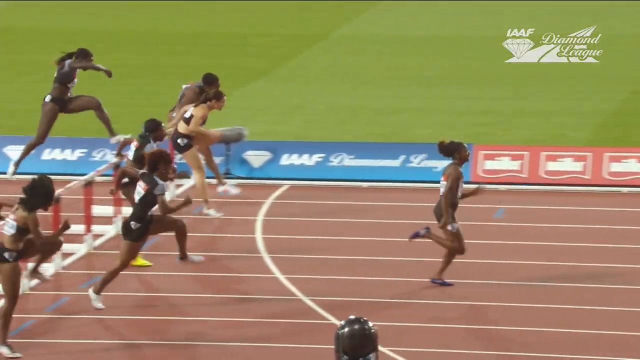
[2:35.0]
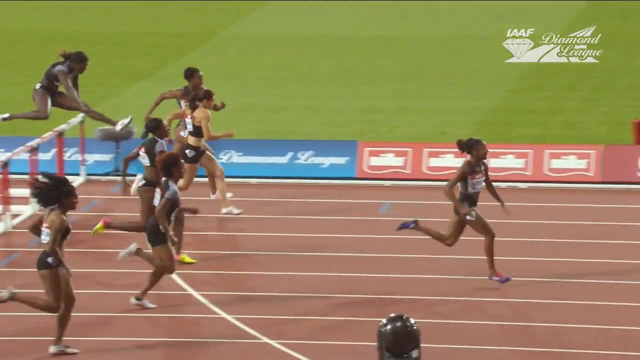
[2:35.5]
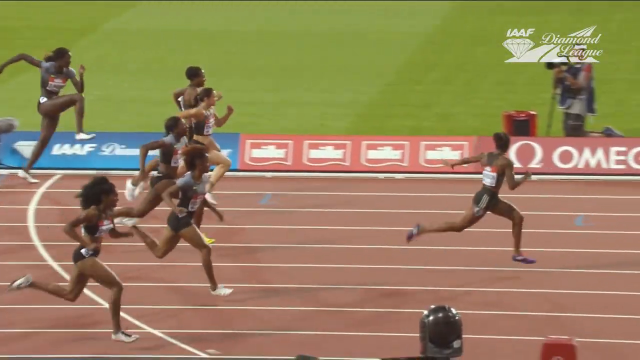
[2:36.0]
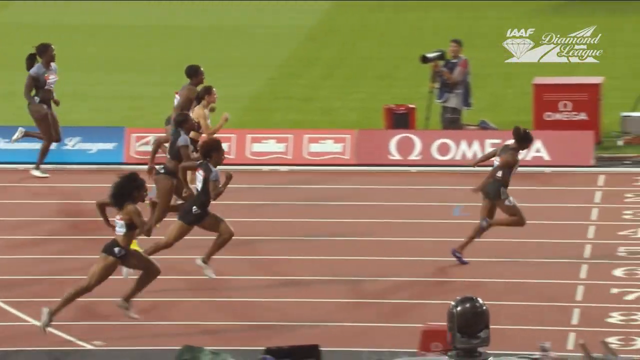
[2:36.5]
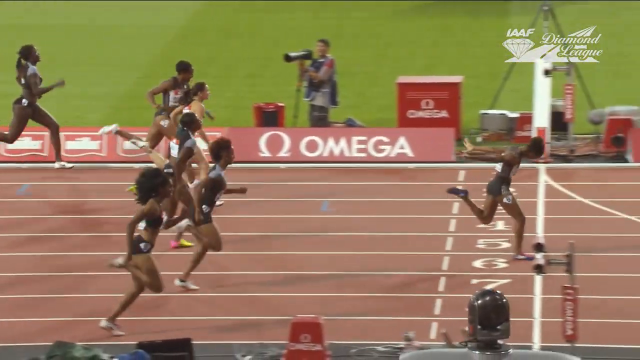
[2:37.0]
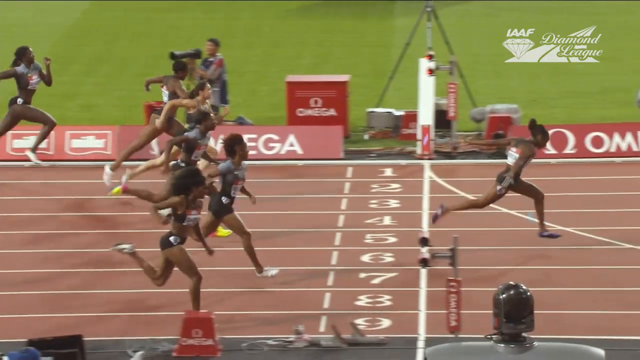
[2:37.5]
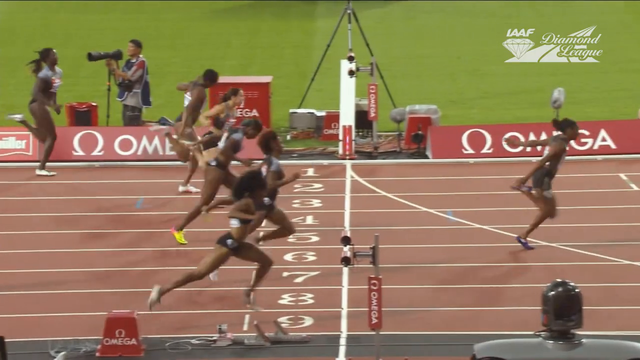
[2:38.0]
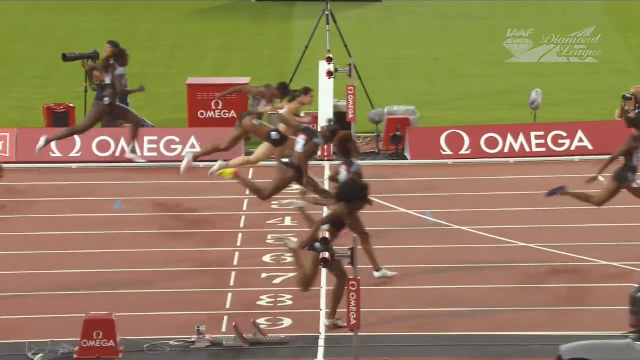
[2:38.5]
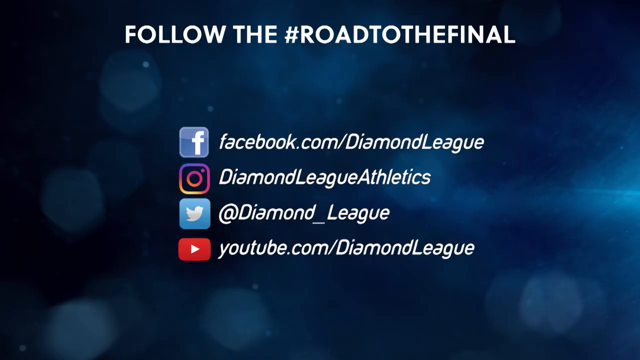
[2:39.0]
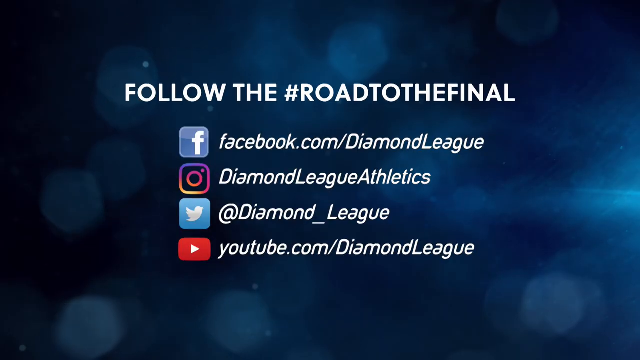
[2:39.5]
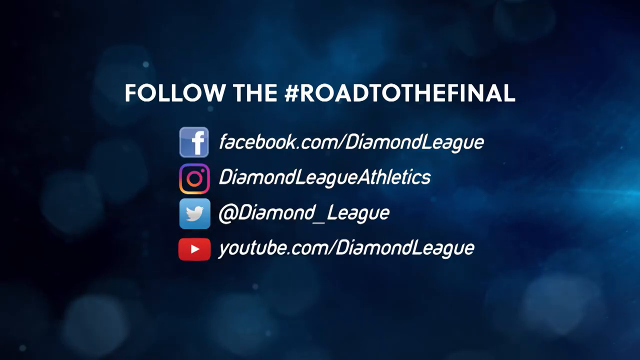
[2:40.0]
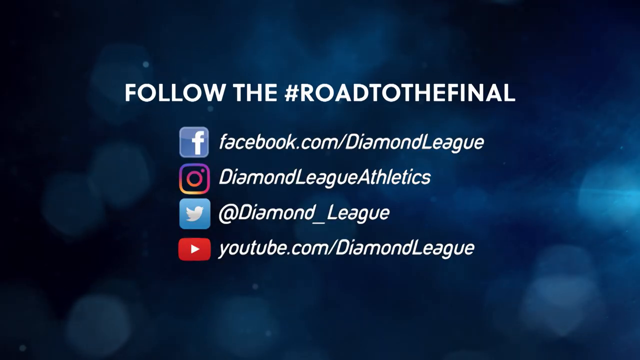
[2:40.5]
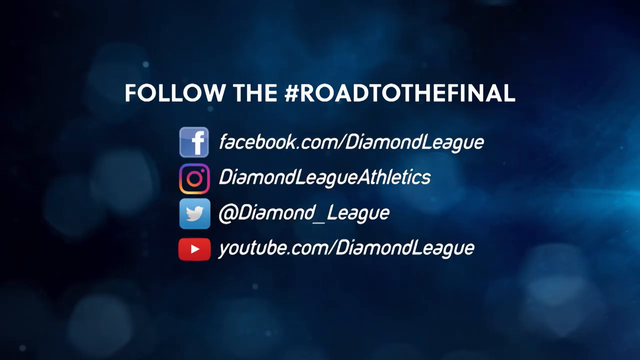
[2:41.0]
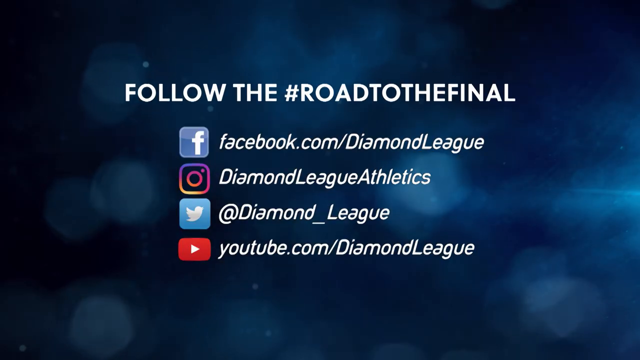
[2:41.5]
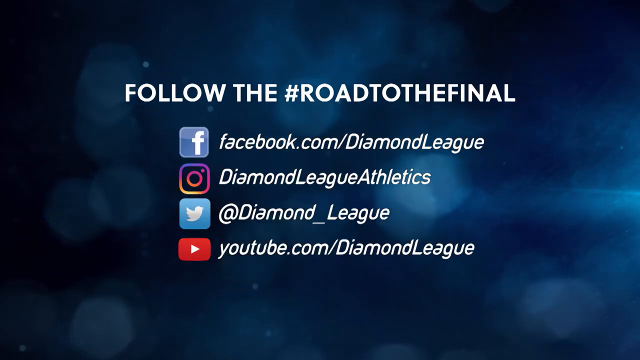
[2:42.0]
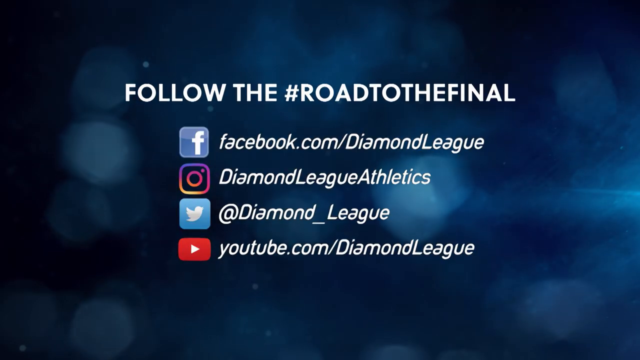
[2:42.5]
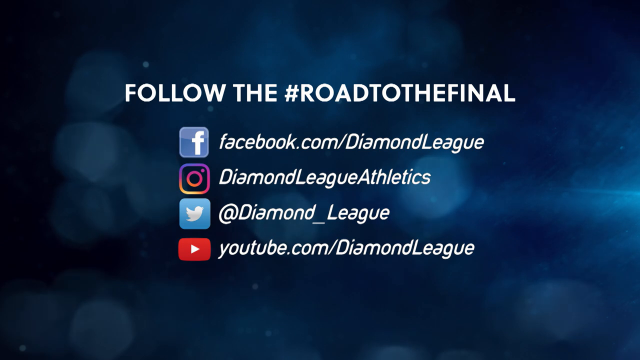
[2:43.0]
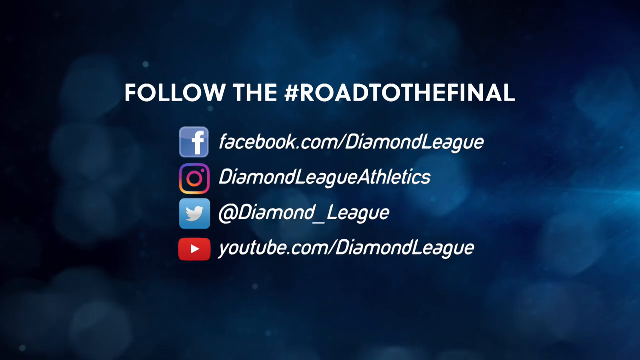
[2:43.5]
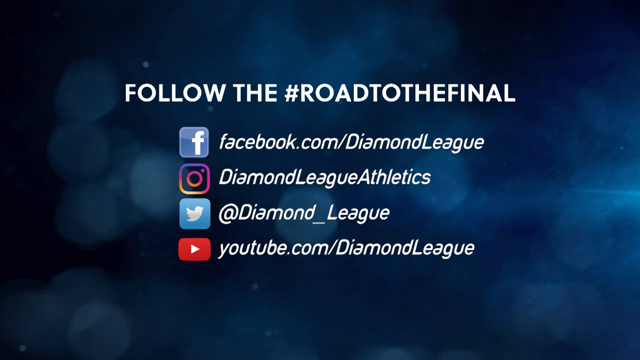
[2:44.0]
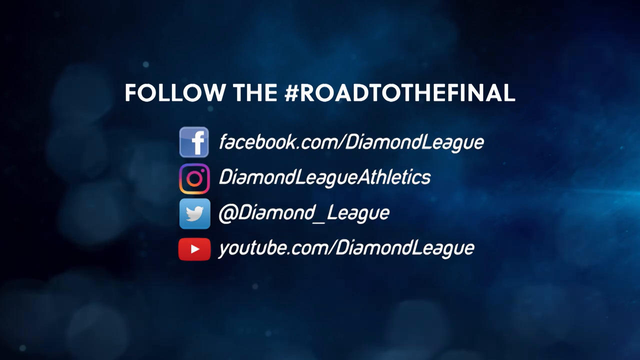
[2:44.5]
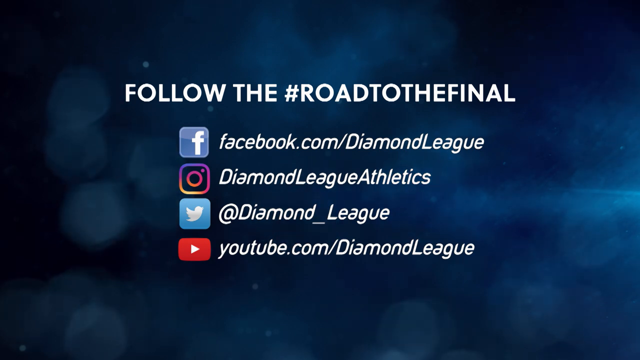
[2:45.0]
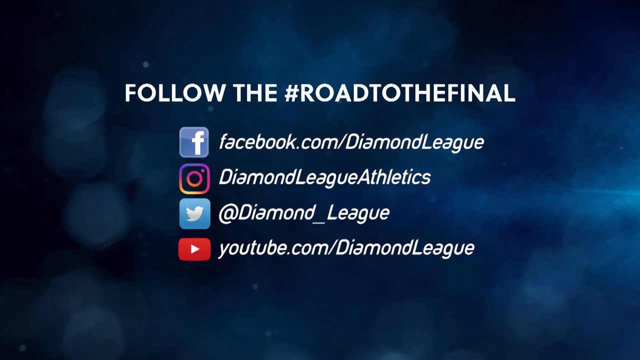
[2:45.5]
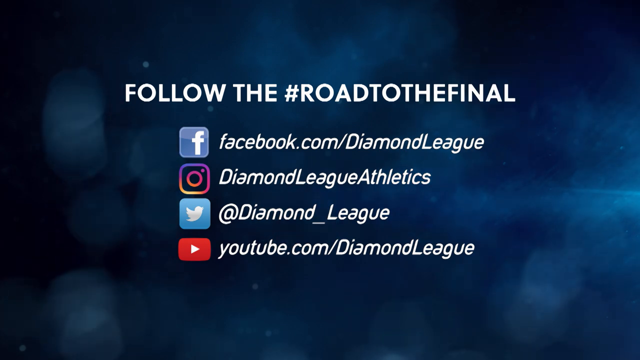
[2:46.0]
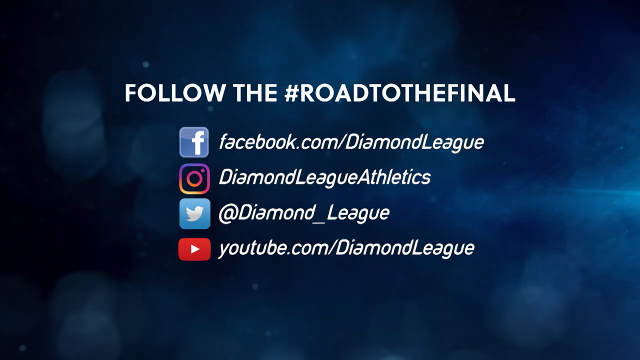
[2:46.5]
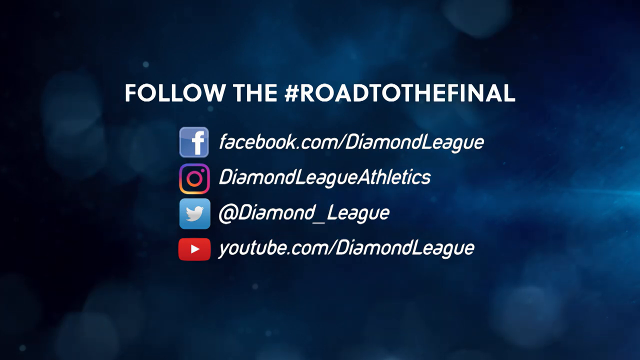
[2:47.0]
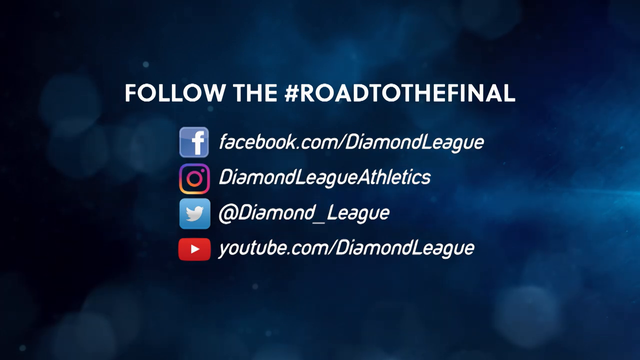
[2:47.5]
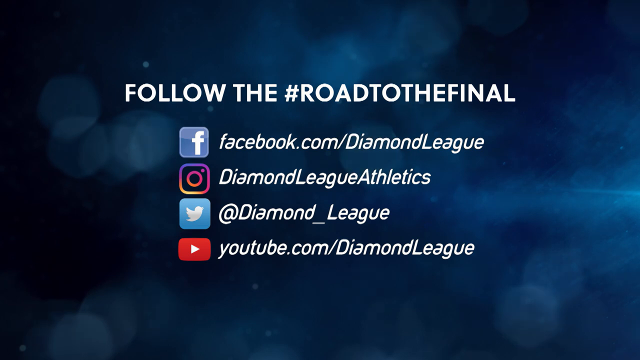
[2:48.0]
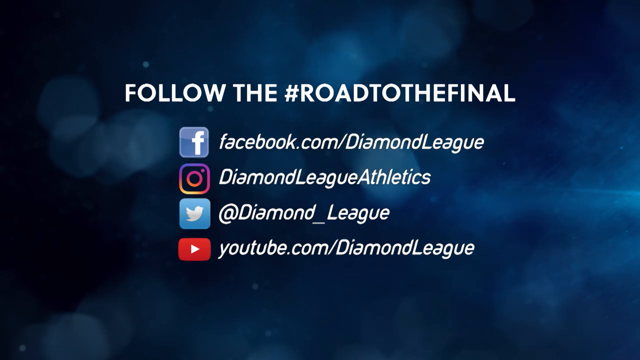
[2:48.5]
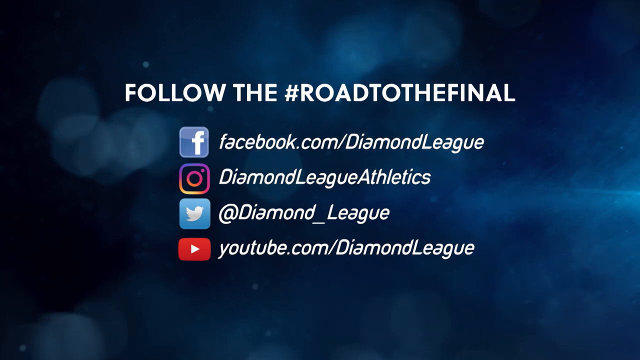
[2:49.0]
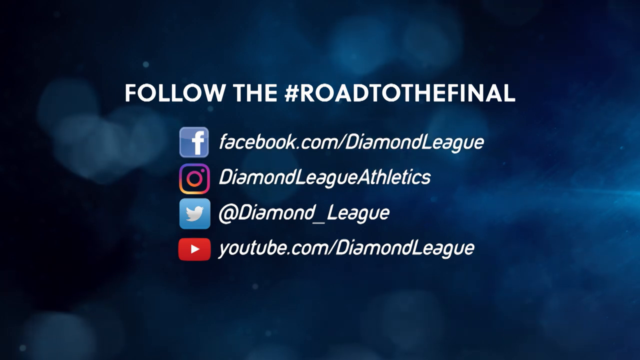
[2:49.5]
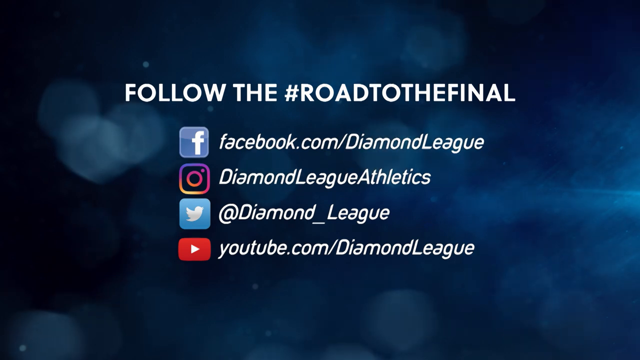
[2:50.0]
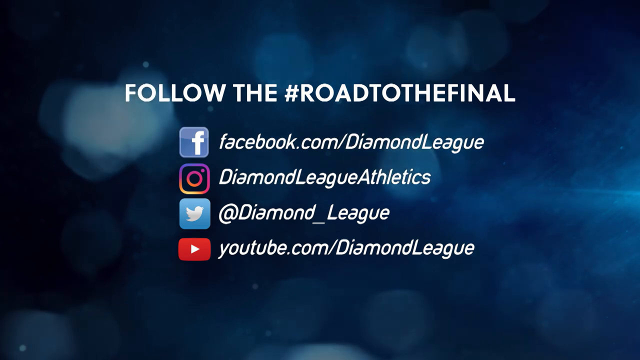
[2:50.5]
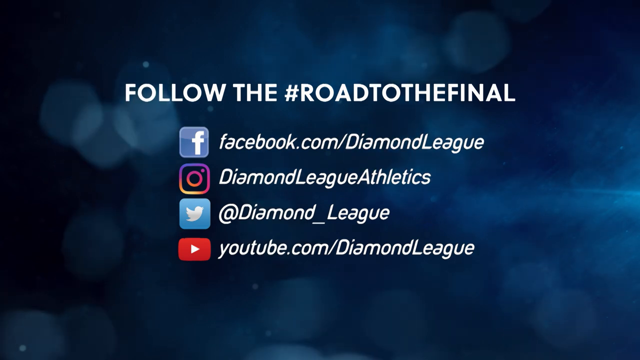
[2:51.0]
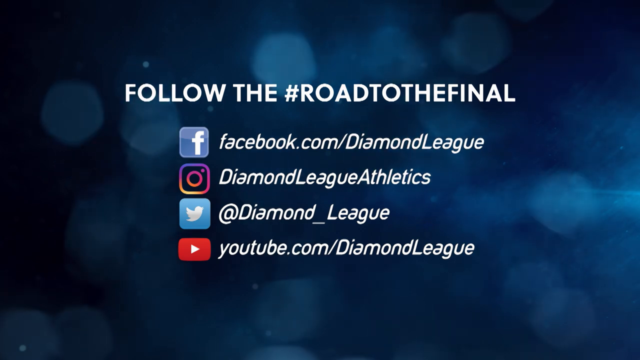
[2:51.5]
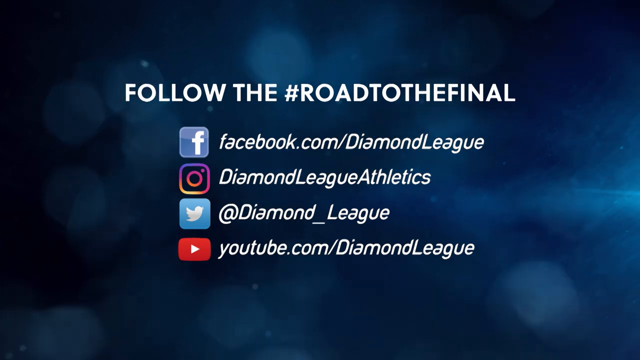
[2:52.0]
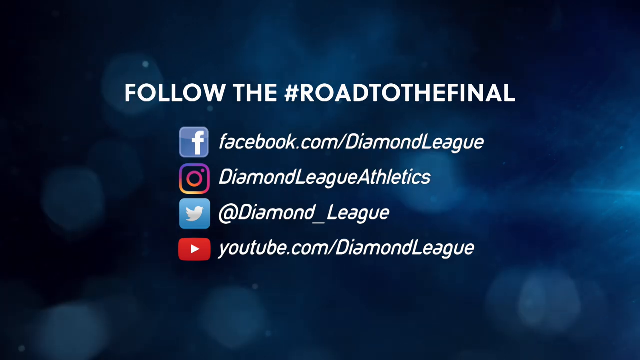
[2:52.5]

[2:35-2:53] The video ends with the social media tags for the IAAF Diamond League. A graphic says to follow the hashtag "Road to the Final" and gives the Diamond League's social media tags, including Facebook, Instagram, X and YouTube.